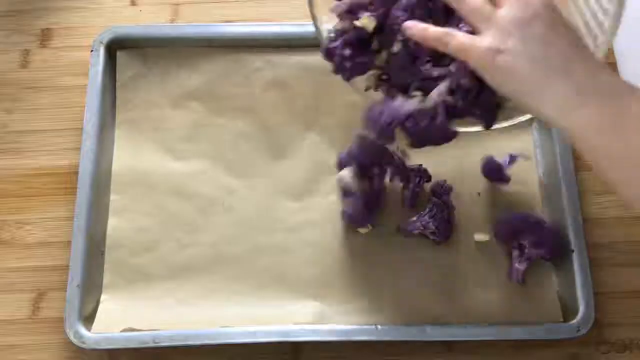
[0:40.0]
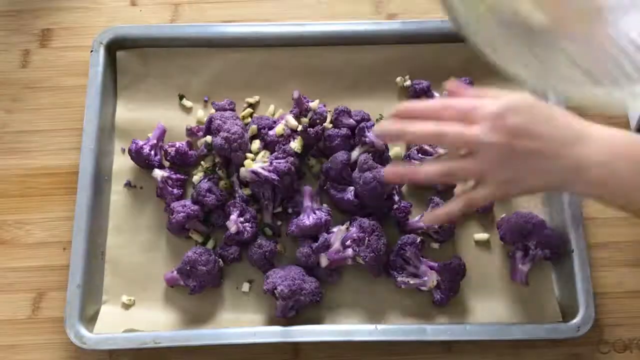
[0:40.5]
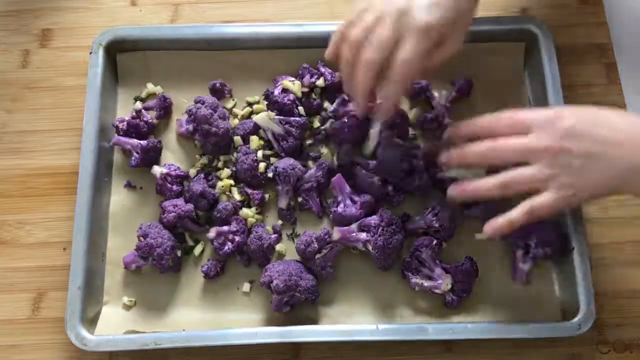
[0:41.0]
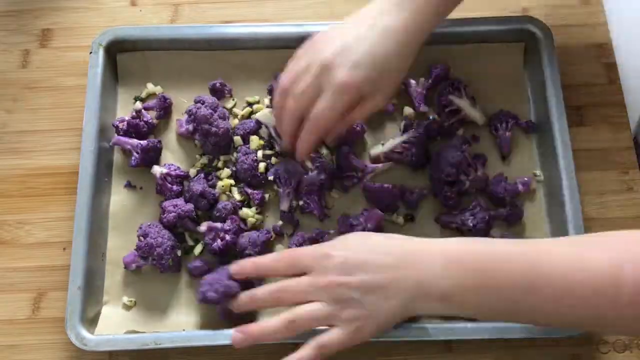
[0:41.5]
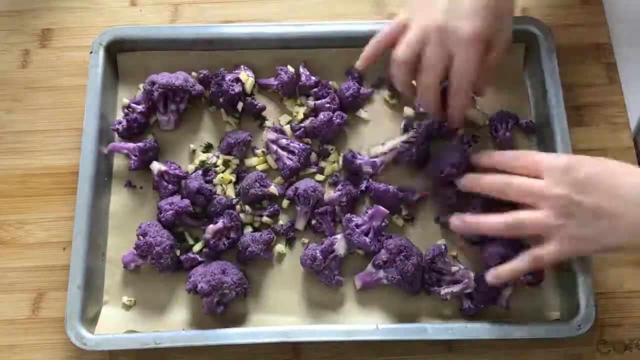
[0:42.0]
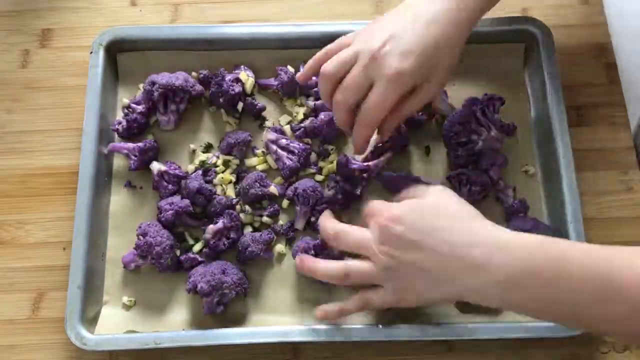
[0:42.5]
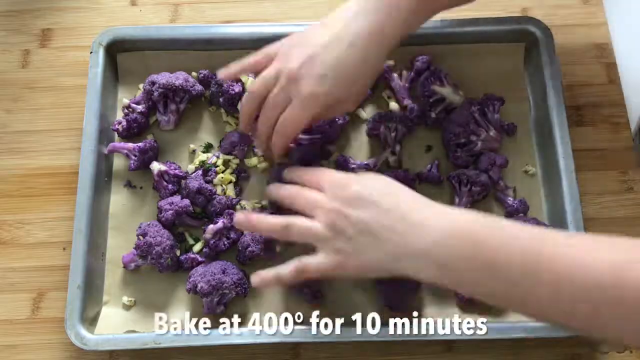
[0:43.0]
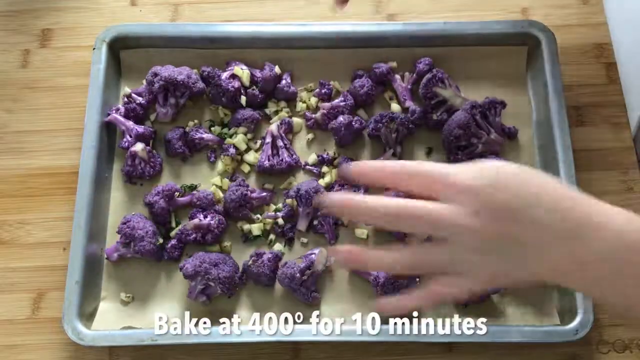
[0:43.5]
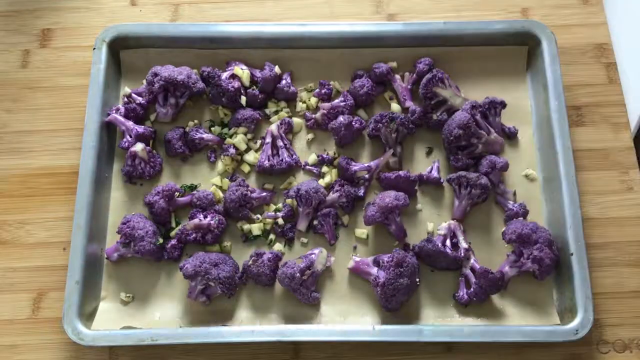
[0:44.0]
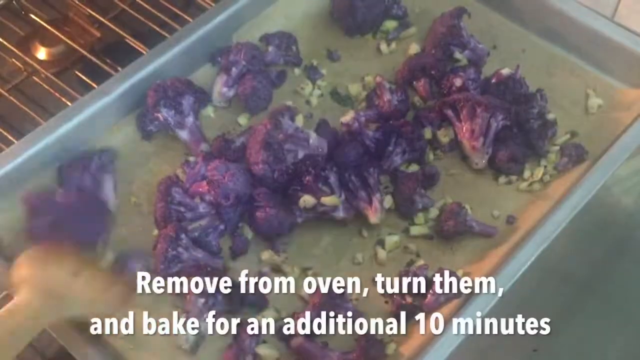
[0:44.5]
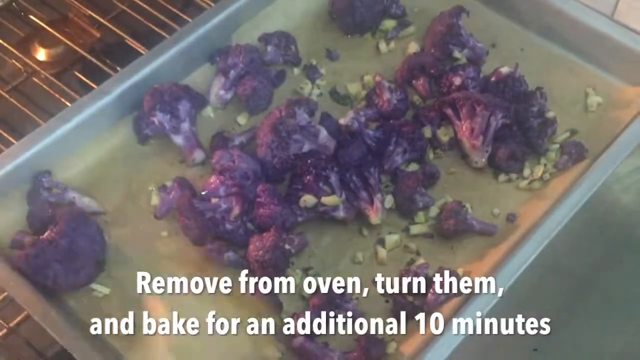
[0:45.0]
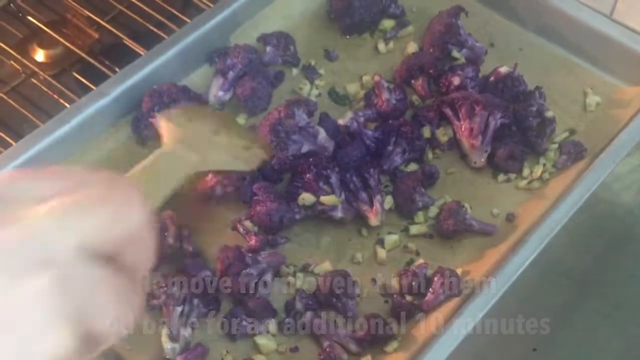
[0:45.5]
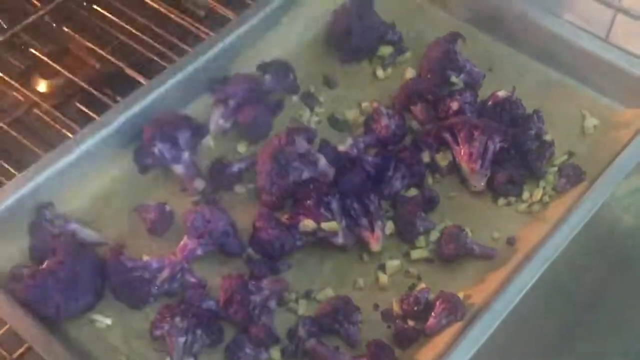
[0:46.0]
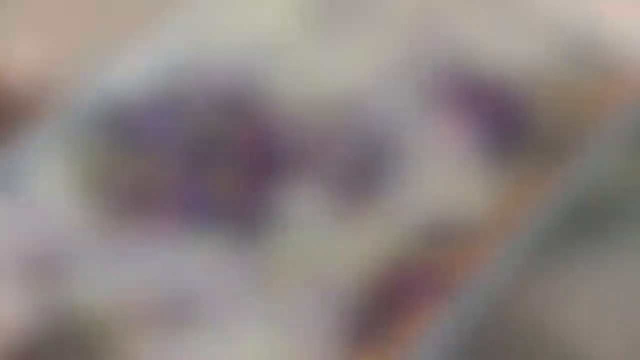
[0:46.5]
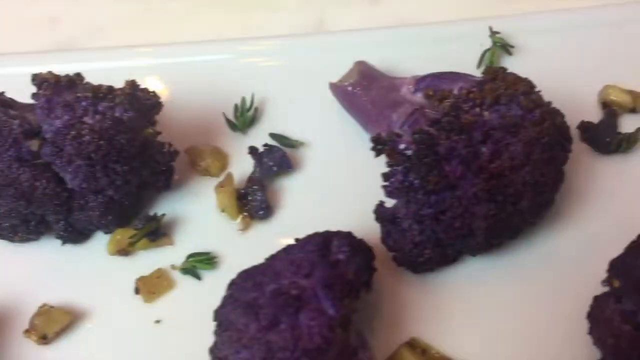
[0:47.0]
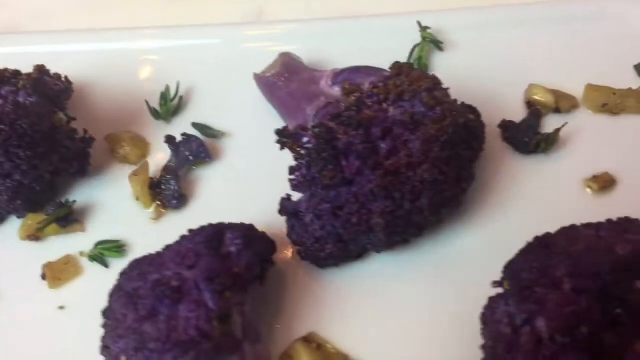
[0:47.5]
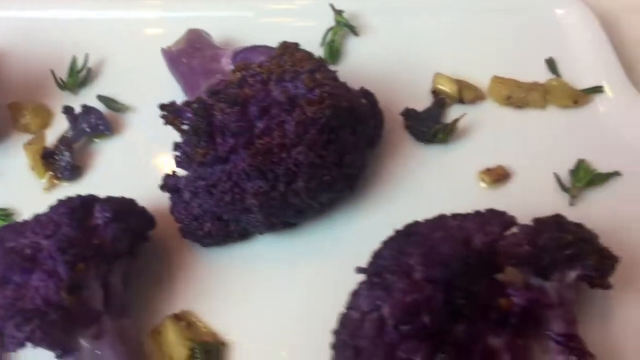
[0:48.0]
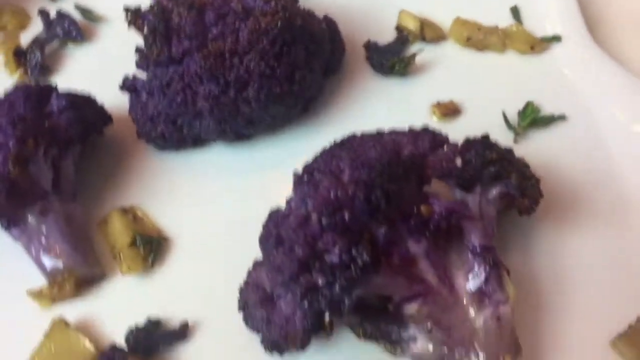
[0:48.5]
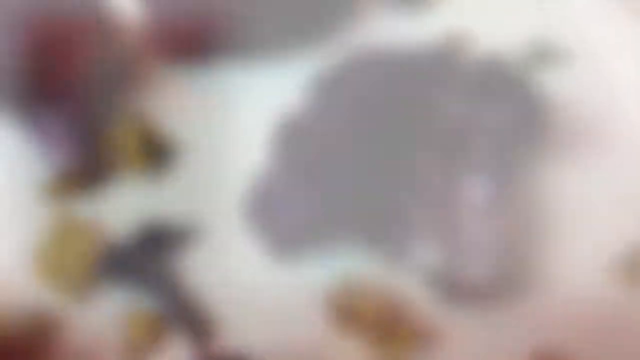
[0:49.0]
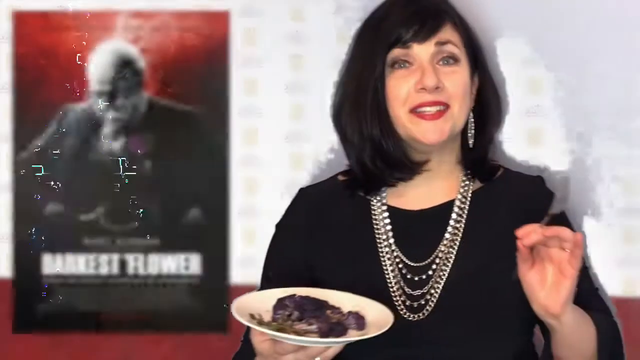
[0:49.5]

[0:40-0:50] The purple cauliflower florets, mixed with the garlic, thyme and olive oil, are spread out on a large pan that seems to have a kind of non-stick paper on it, and the pan seems to be put in the oven. Text seems to say to roast for 40 minutes, then remove them from the oven, turn them and roast them for an additional 10 minutes. The cooked, roasted purple cauliflower florets then appear in a transition screen in the hands of the woman, who is Caucasian, around 30, with multiple necklaces, kind of red lipstick, a black dress and hoop earrings. Beside her is a poster of what looks like a movie, reading "the darkest hour", with Gary Oldman depicted against a kind of smoky background as shown earlier.